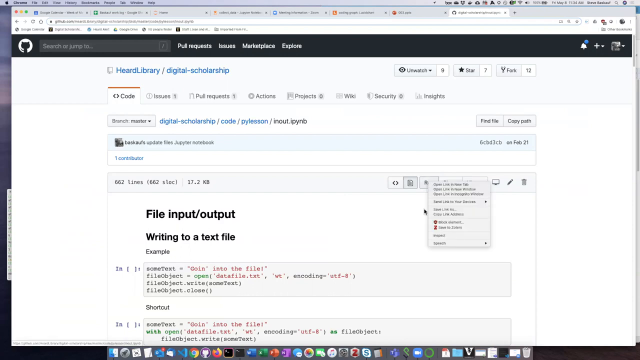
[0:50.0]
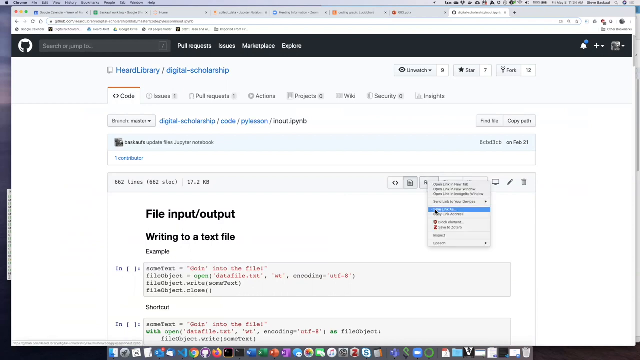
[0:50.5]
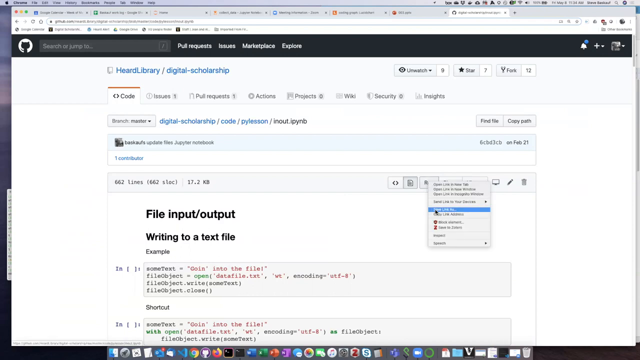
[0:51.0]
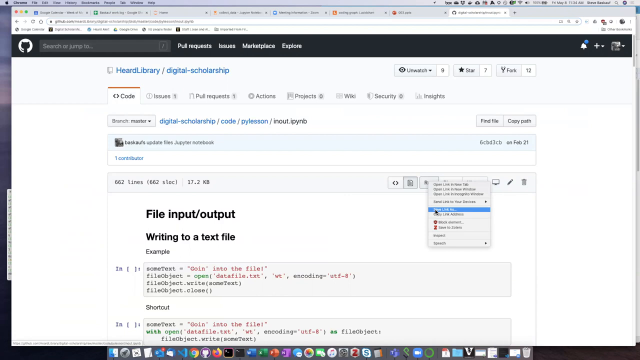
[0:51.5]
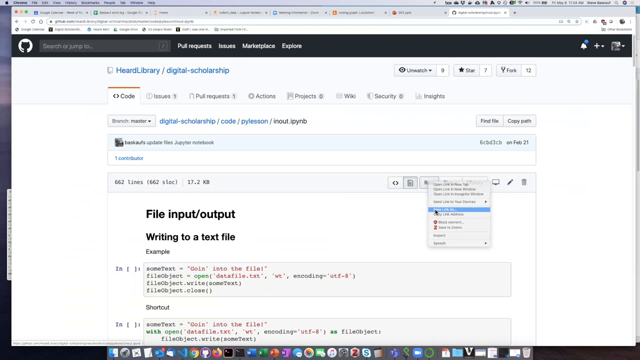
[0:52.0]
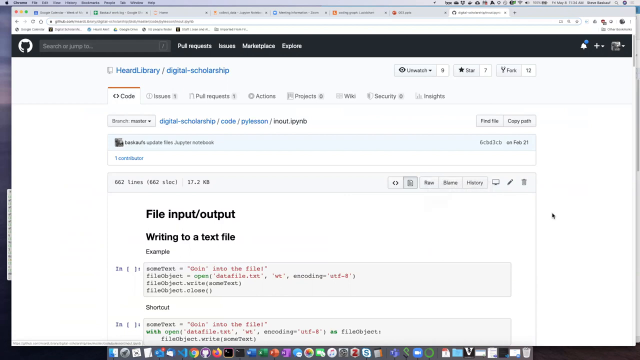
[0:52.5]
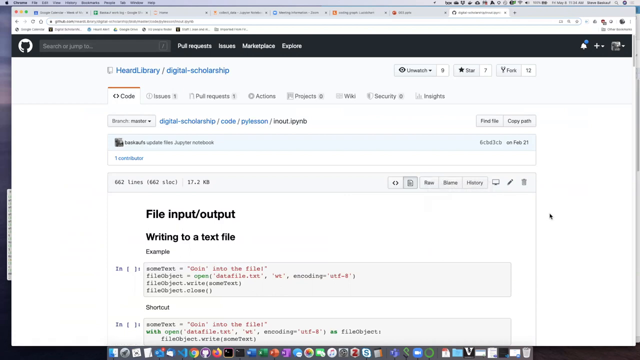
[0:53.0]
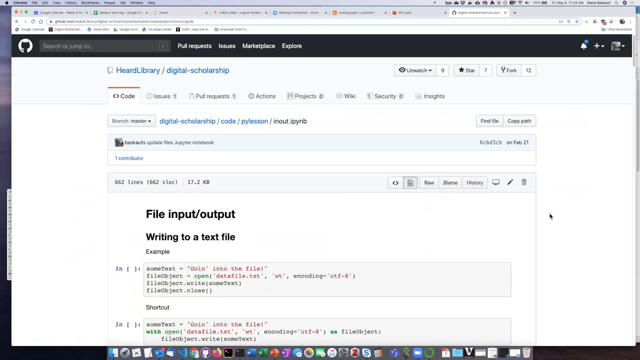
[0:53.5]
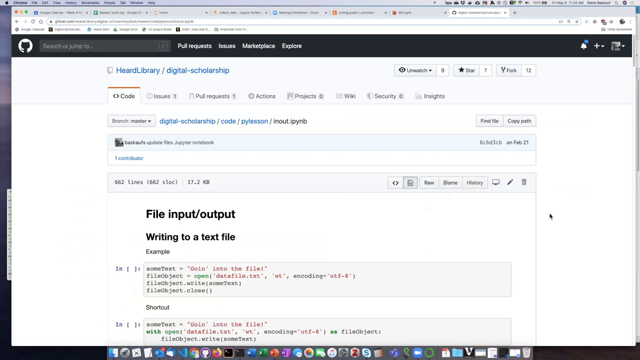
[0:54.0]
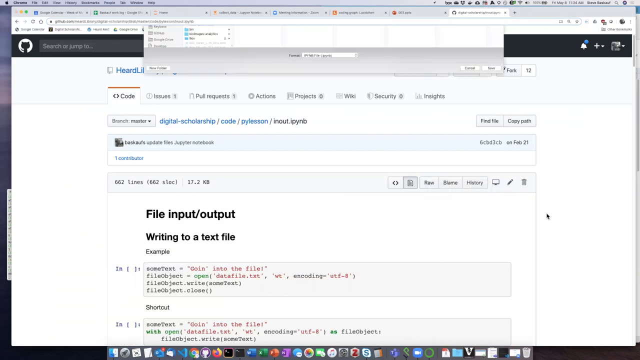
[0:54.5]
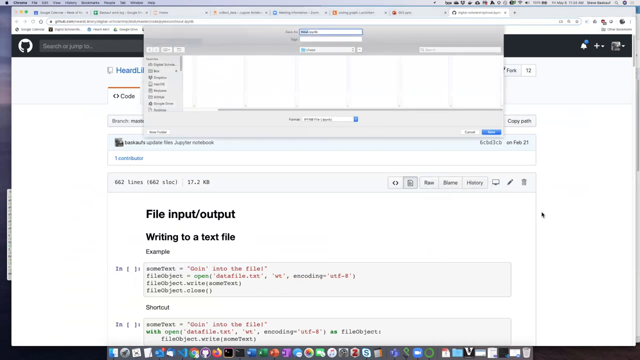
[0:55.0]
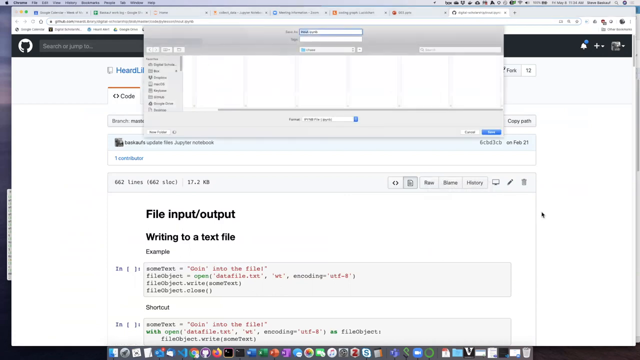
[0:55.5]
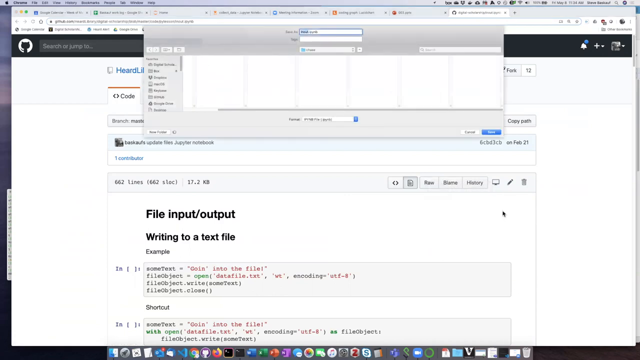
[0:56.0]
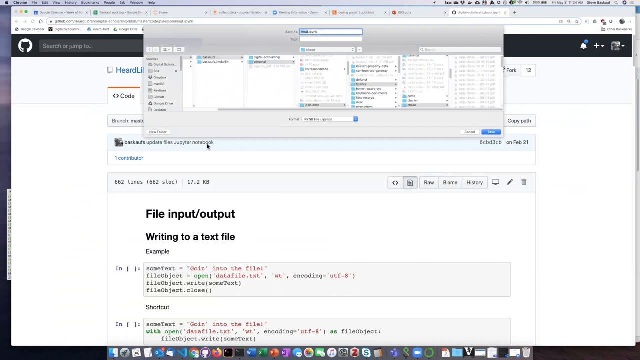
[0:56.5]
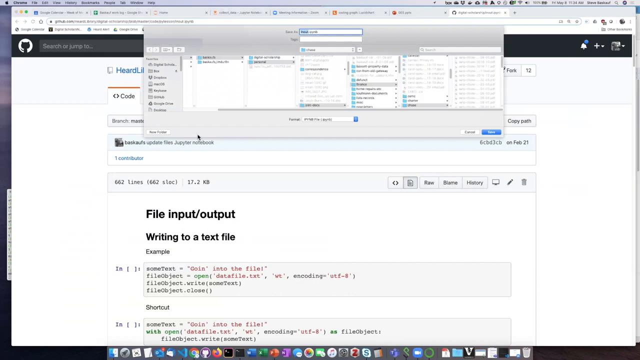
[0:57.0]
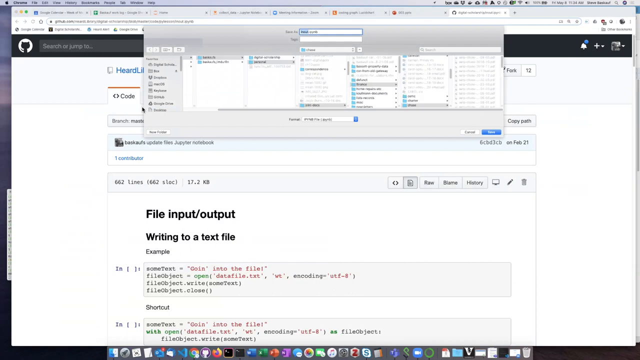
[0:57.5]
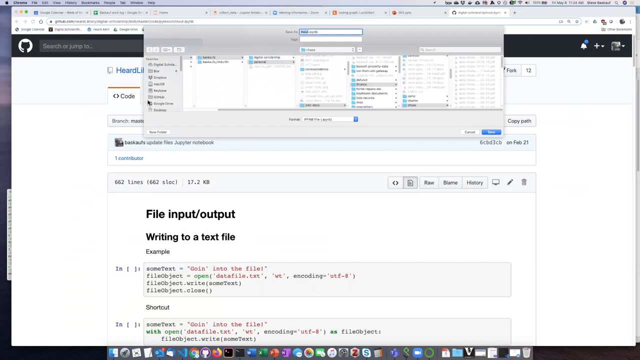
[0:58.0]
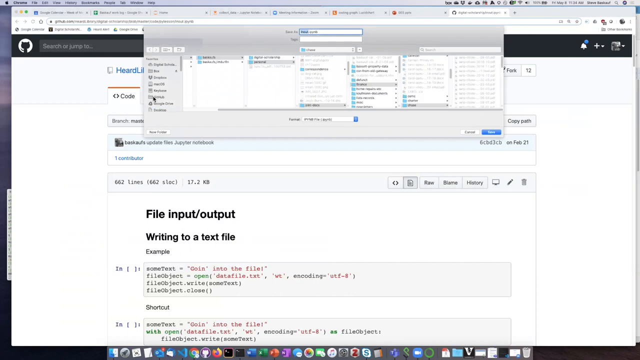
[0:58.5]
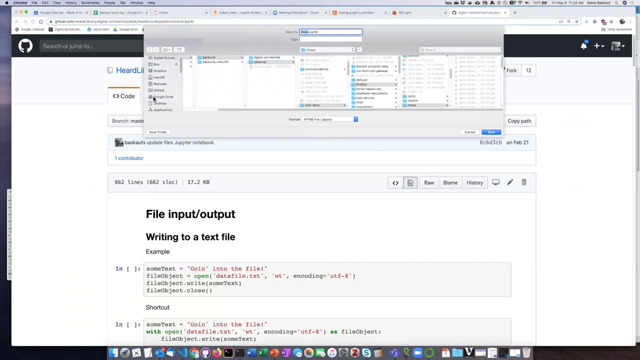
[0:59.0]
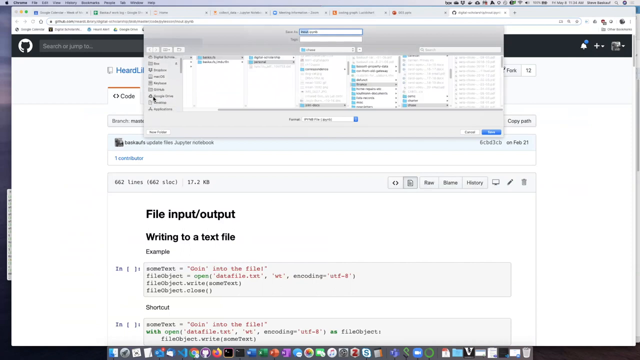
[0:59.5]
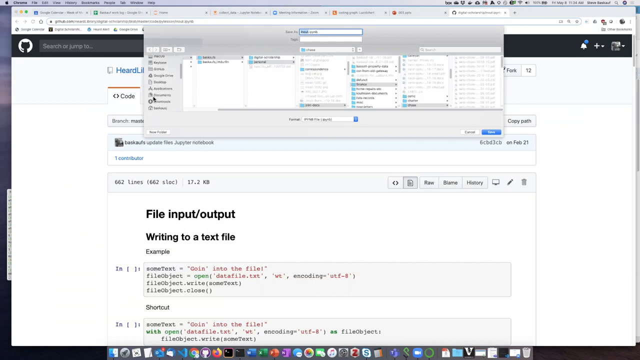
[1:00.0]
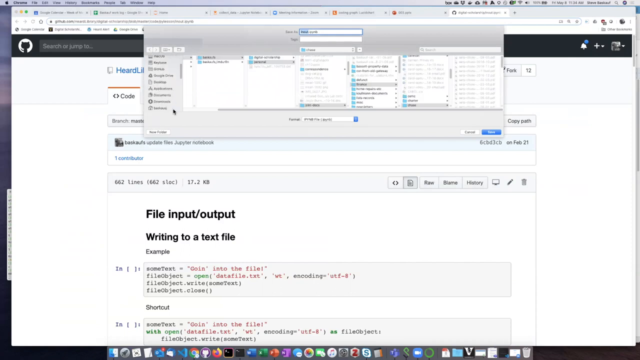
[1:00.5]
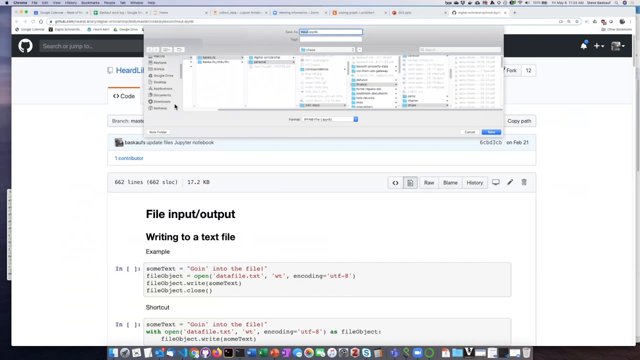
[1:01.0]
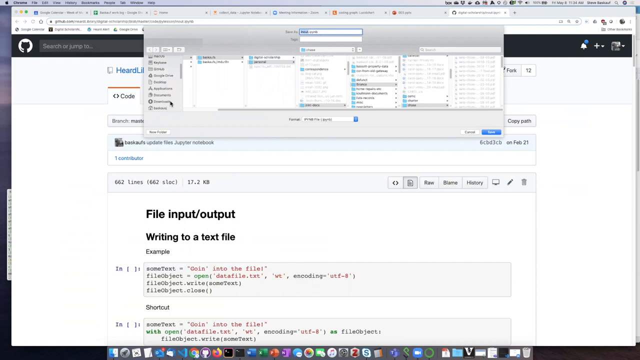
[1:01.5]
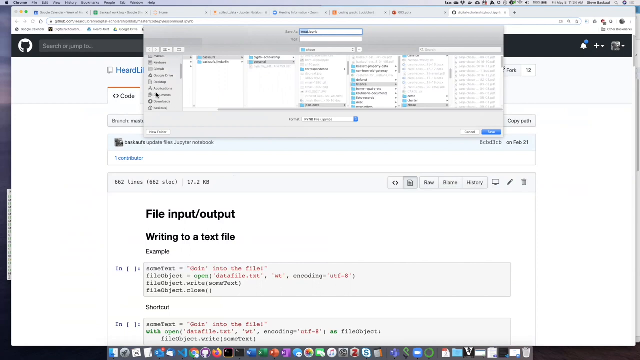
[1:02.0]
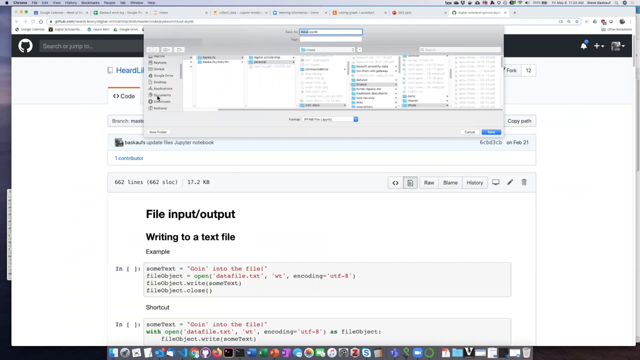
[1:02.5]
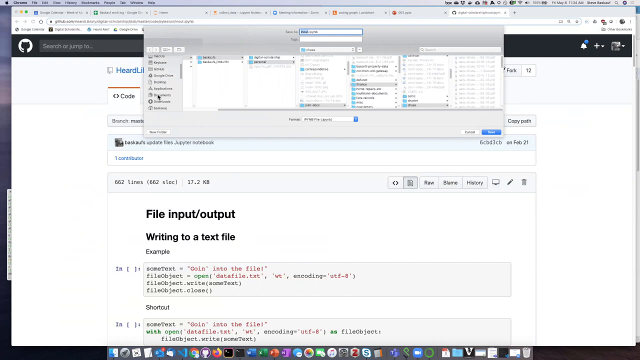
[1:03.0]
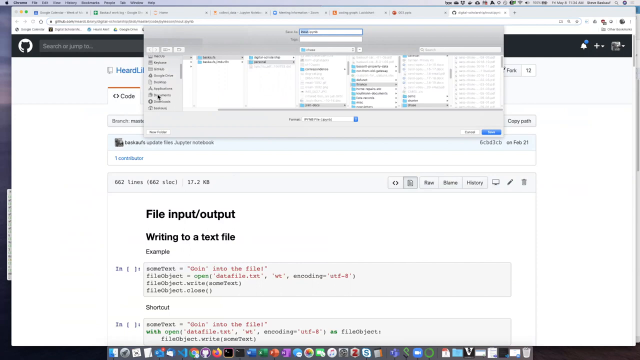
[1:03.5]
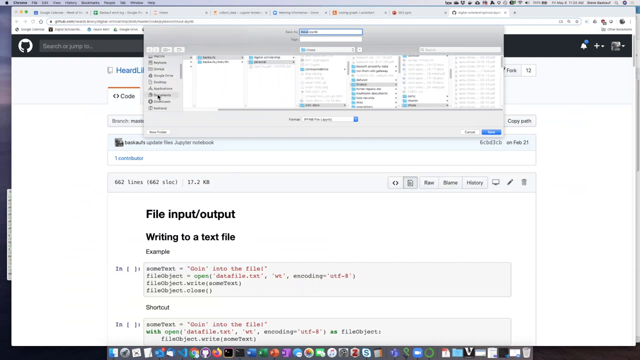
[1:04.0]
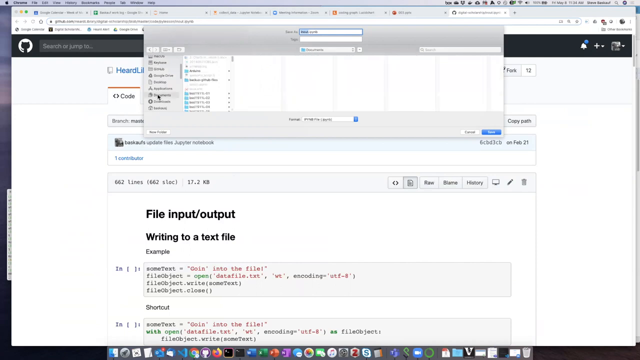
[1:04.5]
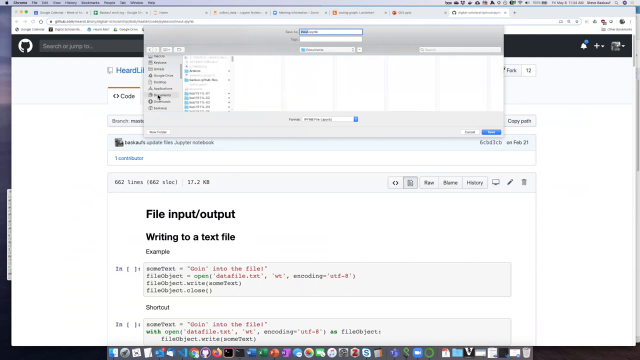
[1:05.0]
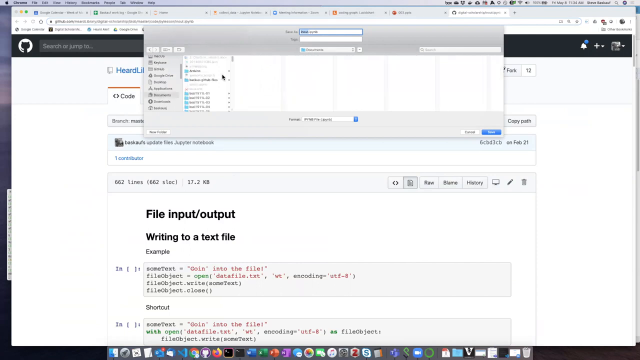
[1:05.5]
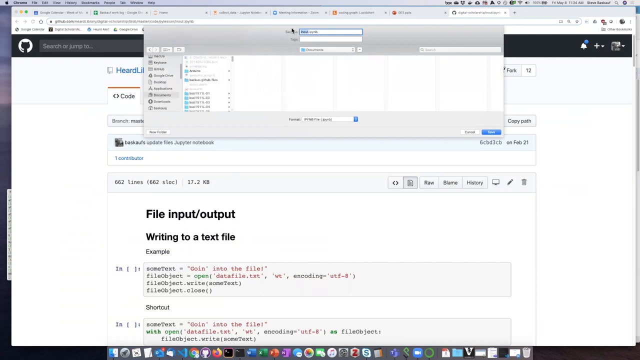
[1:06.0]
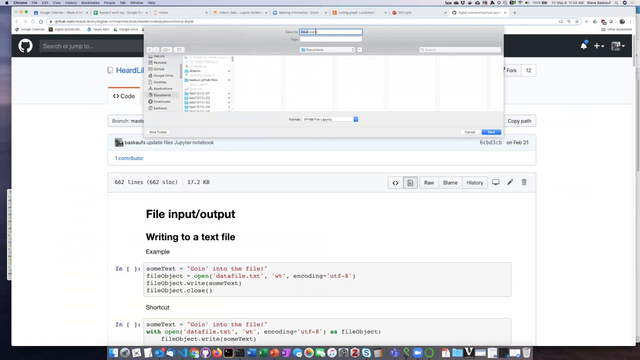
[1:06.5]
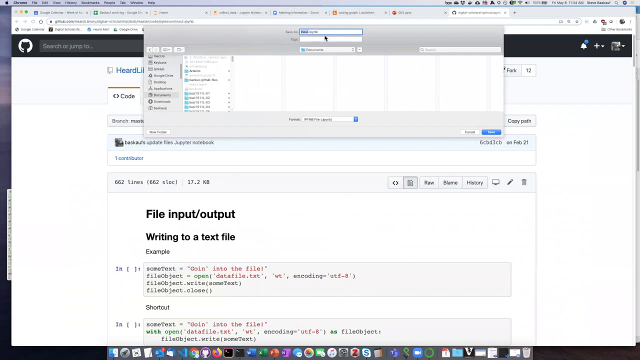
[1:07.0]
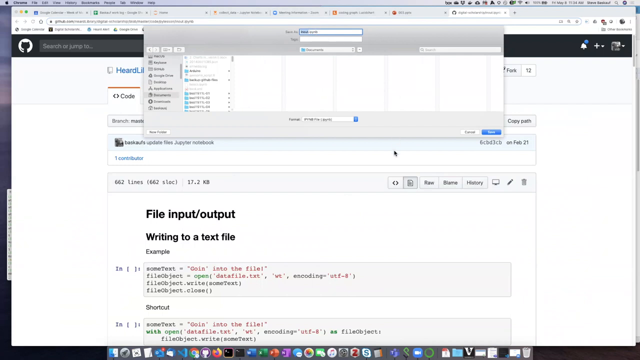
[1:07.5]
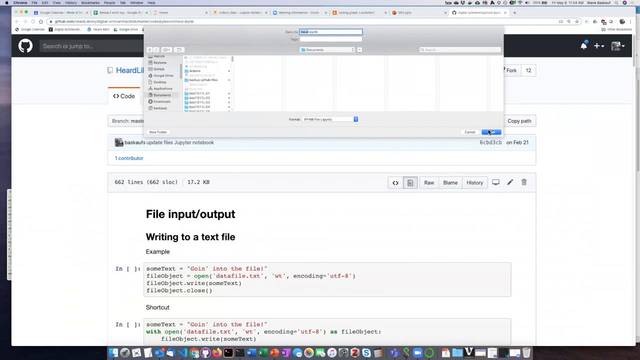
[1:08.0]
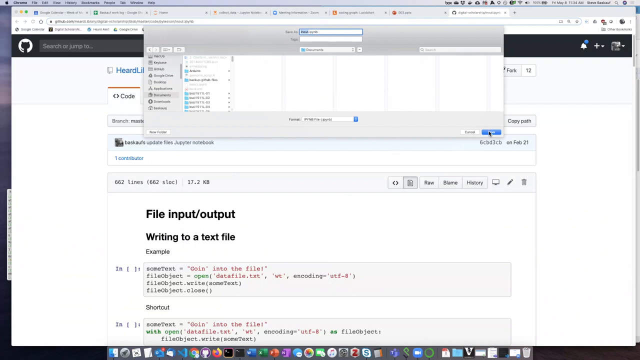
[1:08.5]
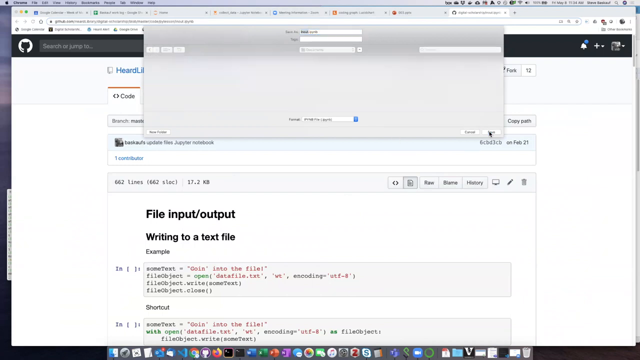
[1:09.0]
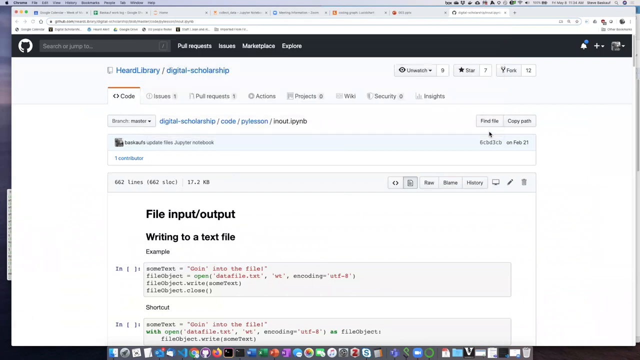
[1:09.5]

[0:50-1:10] In the dropdown menu, the cursor stops on the fifth option down, which turns blue as it is clicked. The cursor moves over to the right, and a box appears at the top of the page with eight lines on the left side and some open boxes. The cursor selects something on the left, and the boxes inside are populated: six boxes, somewhat like cells, filled with writing that is too small to read. The cursor then goes to the right-hand corner, where there is a blue button, and clicks on it.